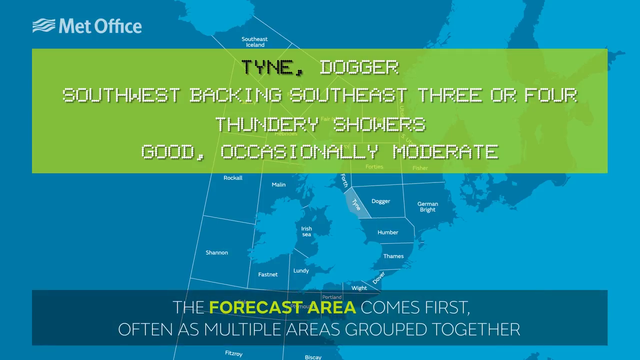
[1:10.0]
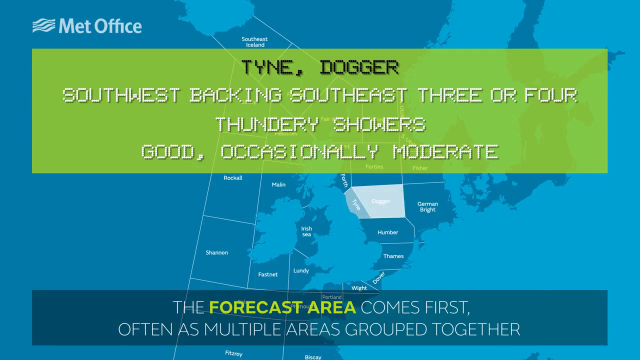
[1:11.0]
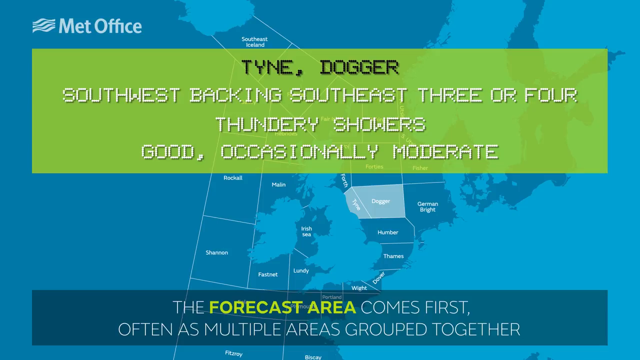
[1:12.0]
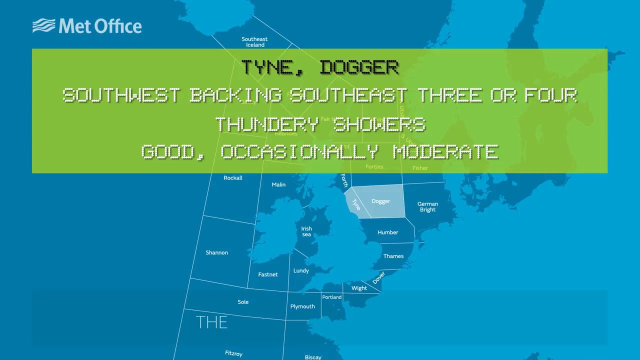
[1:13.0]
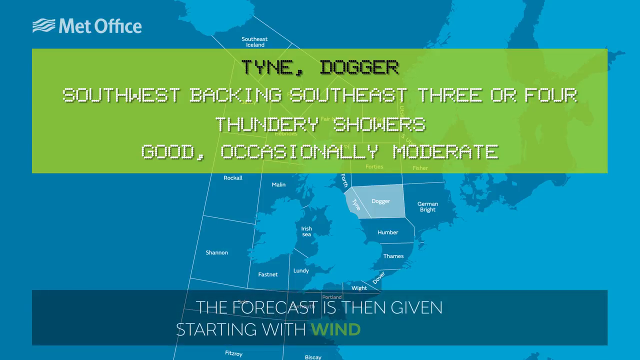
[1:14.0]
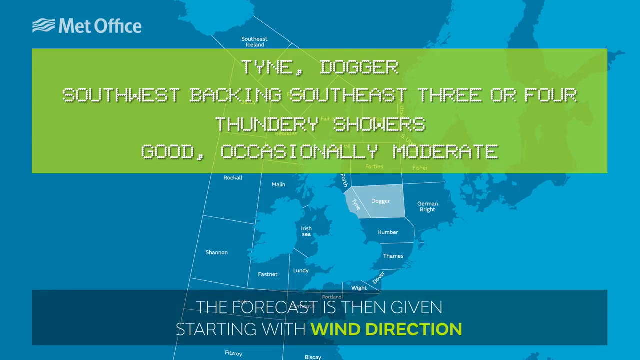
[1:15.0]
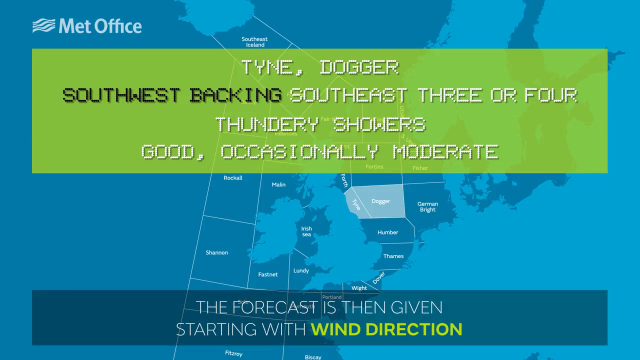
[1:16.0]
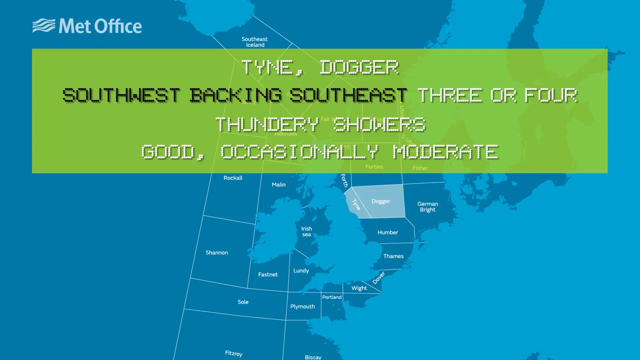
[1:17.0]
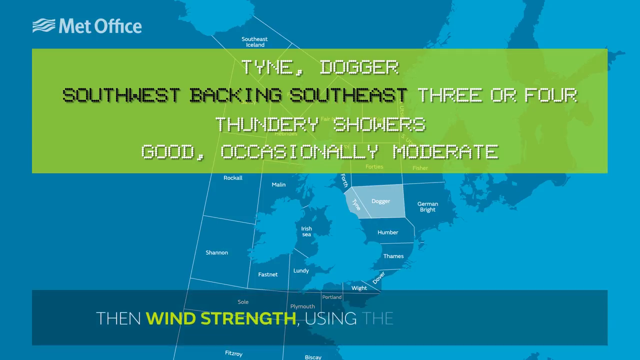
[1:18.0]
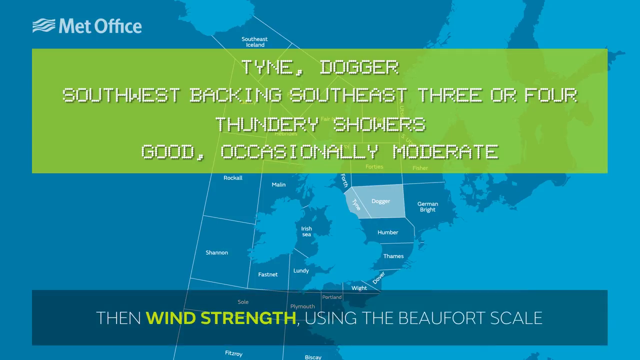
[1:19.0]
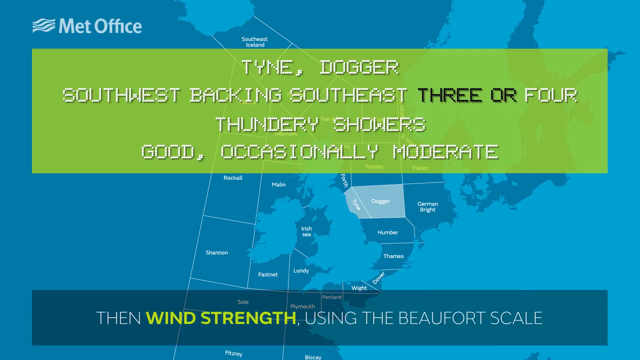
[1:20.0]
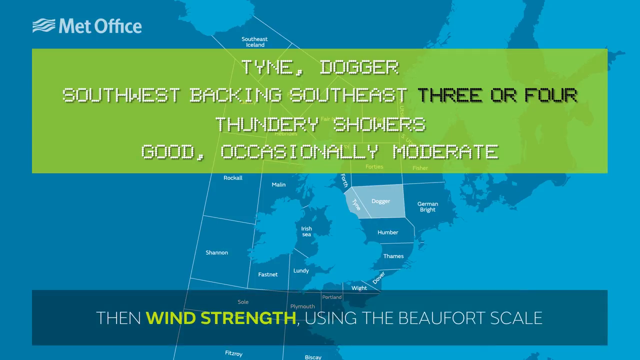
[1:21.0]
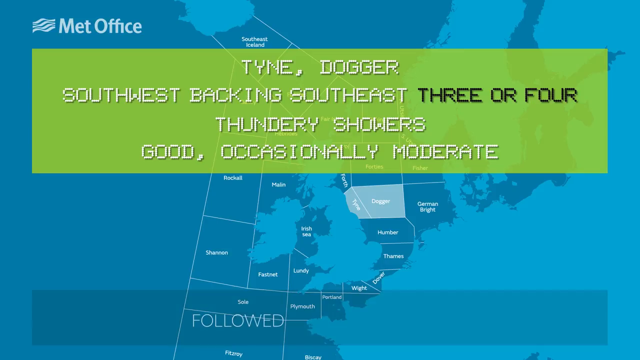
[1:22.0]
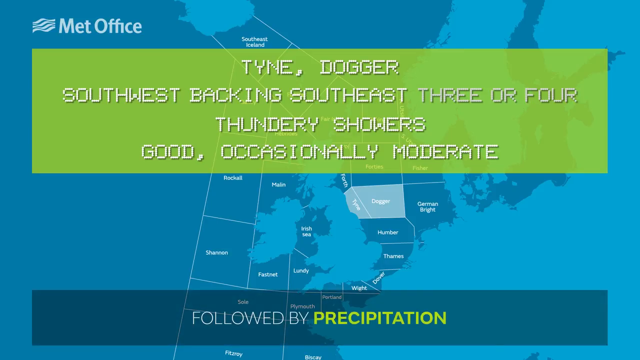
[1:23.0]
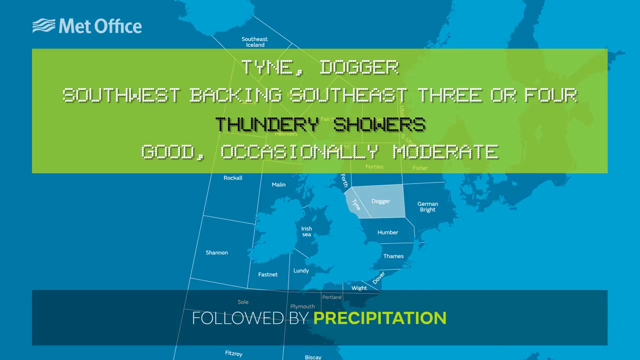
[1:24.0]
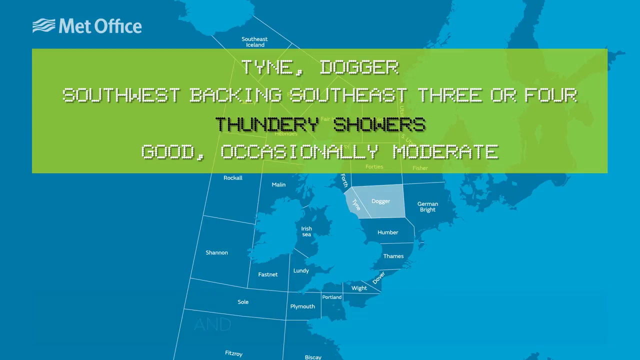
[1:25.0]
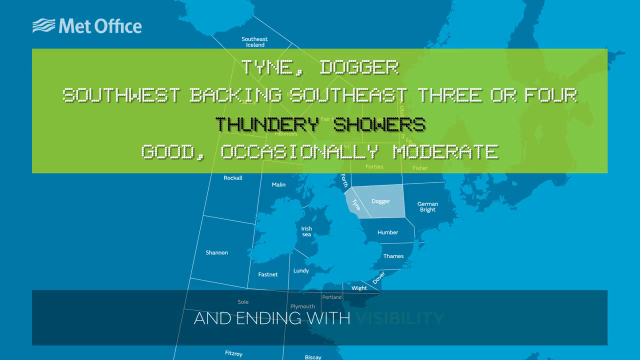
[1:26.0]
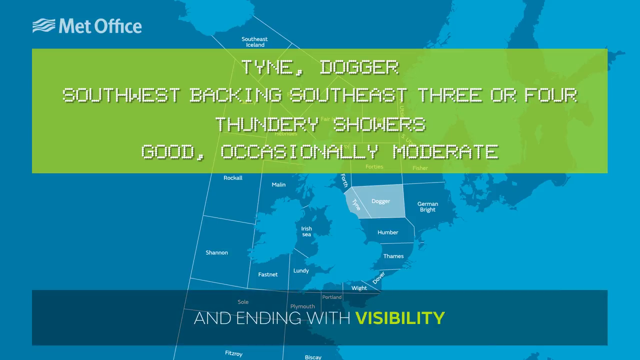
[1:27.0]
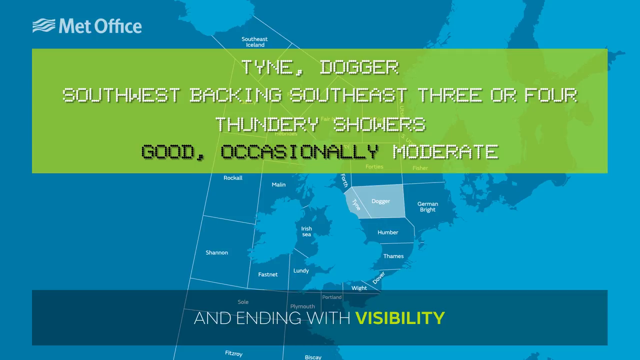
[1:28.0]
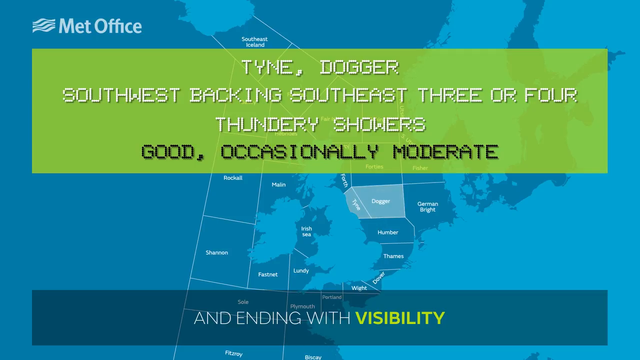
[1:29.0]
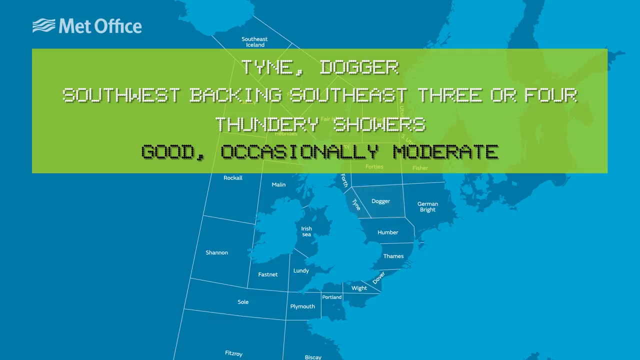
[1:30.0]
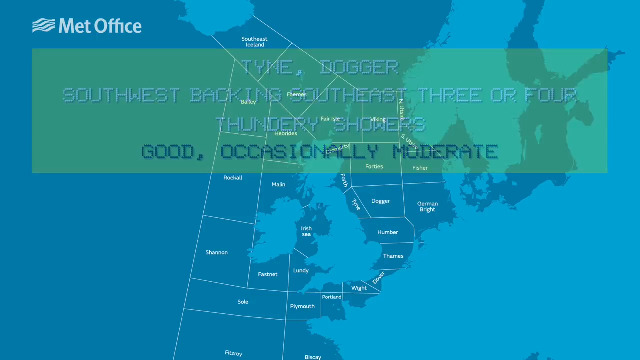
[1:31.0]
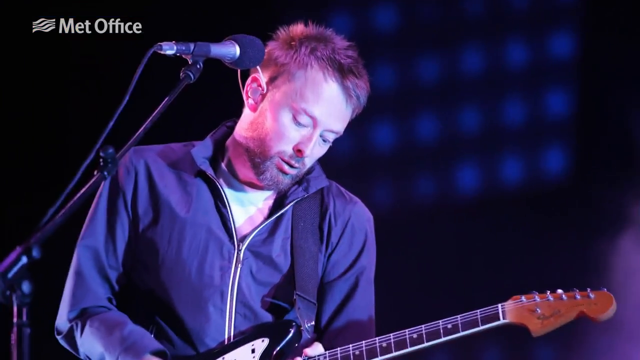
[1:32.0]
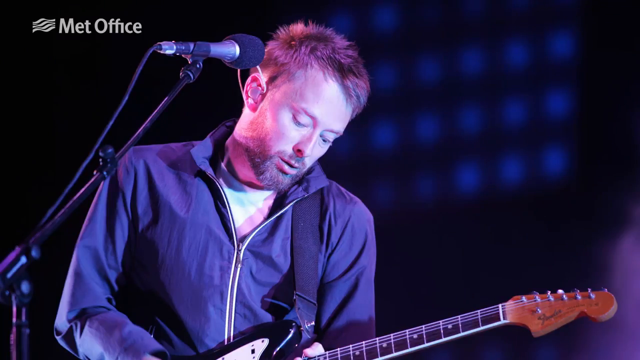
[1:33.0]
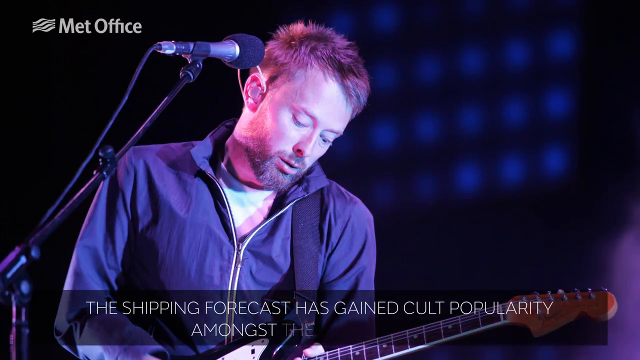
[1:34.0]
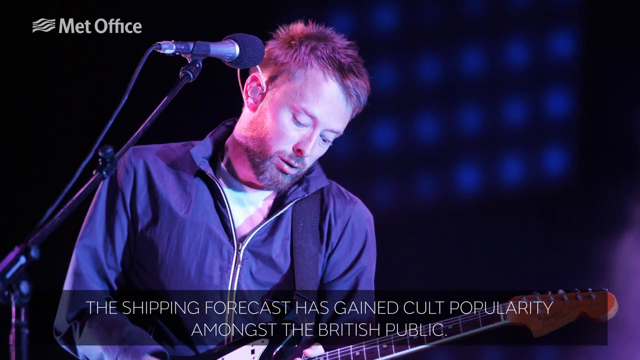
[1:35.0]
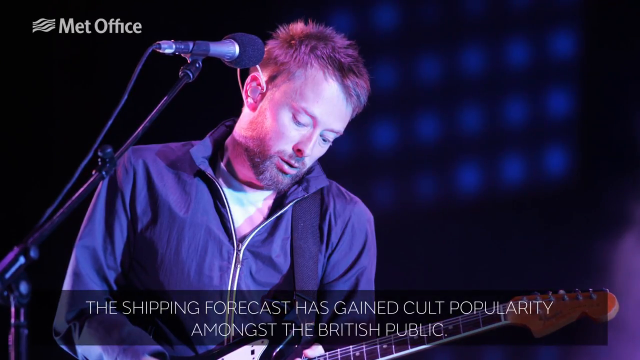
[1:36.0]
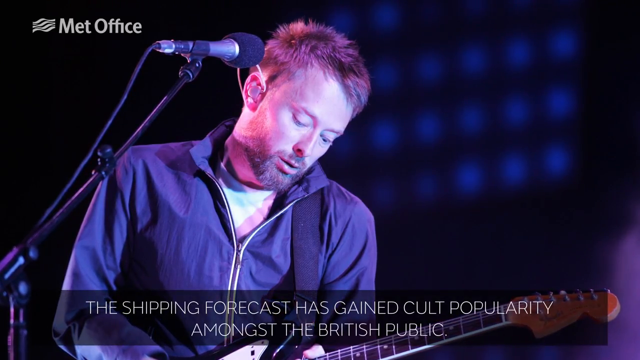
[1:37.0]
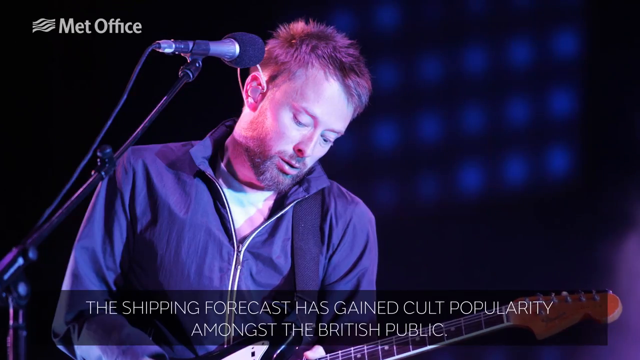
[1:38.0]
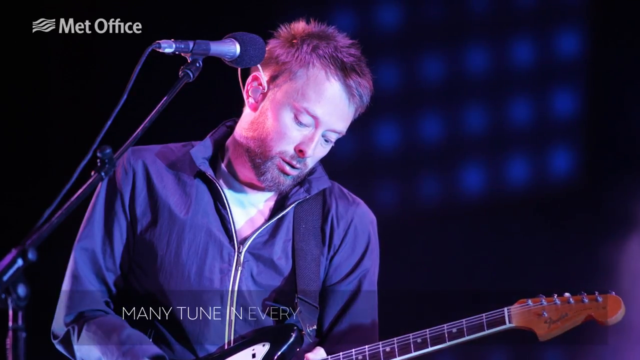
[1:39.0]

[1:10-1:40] Text mentions "Tyne", "South West" and "South East", "three or four" thundery showers and "occasionally moderate", in a forecast from the Met Office. Maps of the country show different temperatures. Text explains that the forecast areas come first, then the forecast is given starting with wind direction, then wind strength using the Beaufort scale, followed by precipitation and ending with visibility. A man who is a guitarist is then shown playing a guitar, looking very serious about what he is doing.